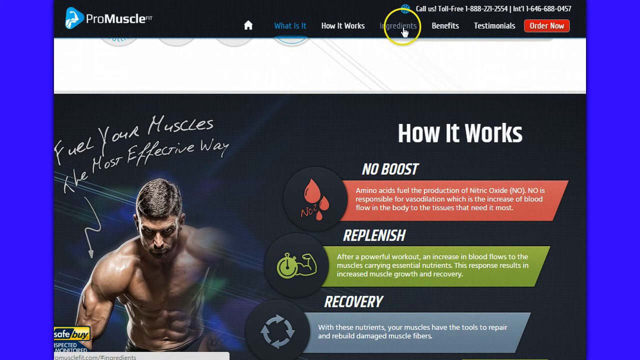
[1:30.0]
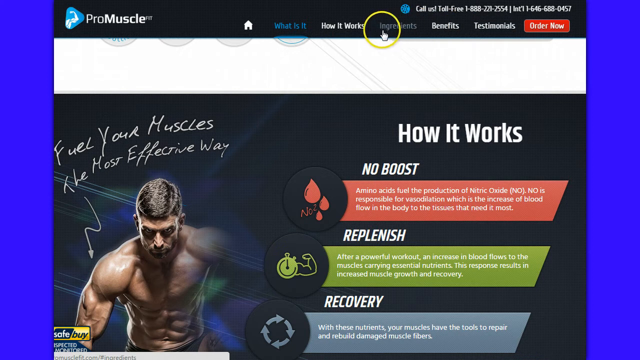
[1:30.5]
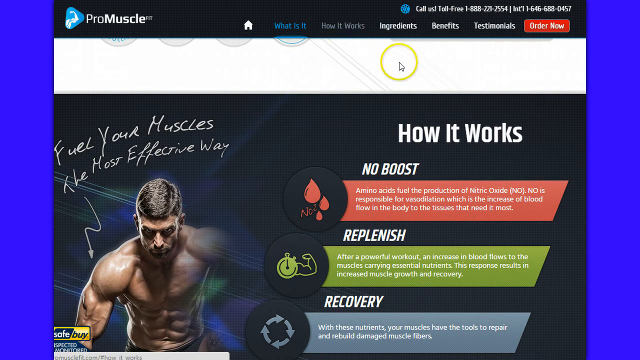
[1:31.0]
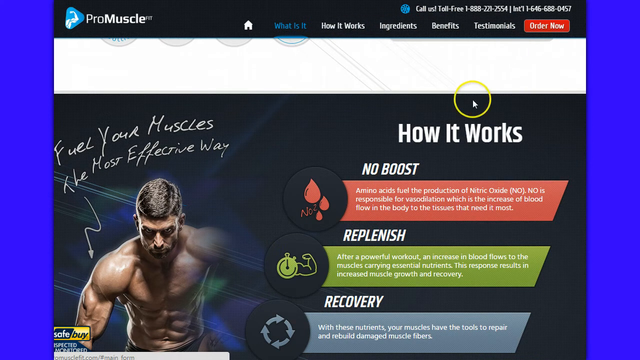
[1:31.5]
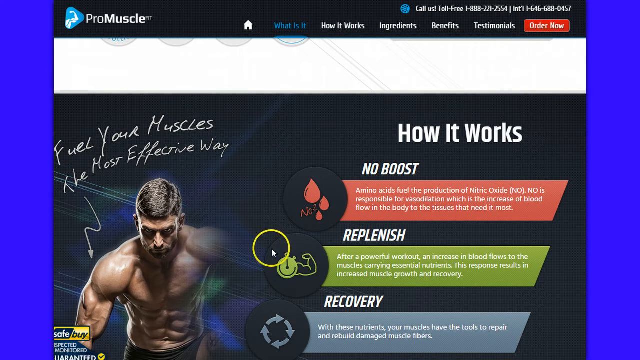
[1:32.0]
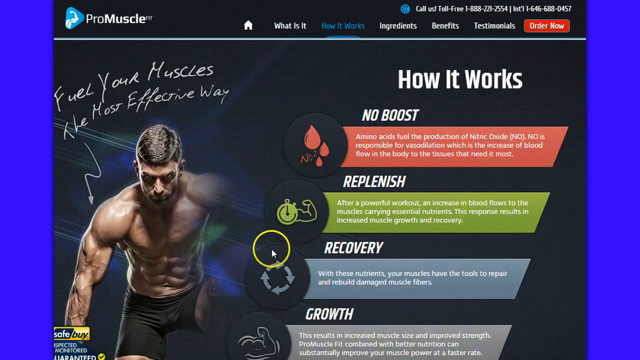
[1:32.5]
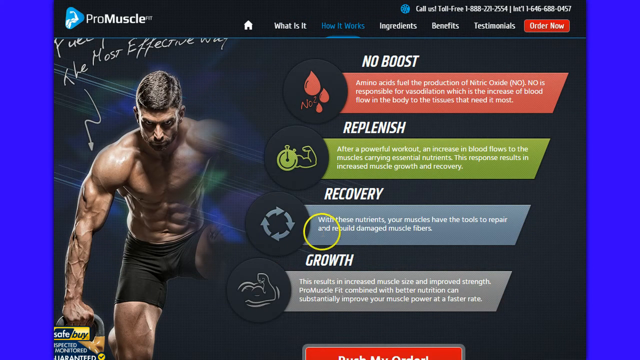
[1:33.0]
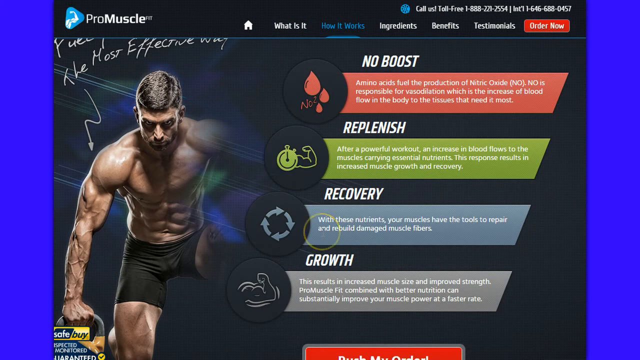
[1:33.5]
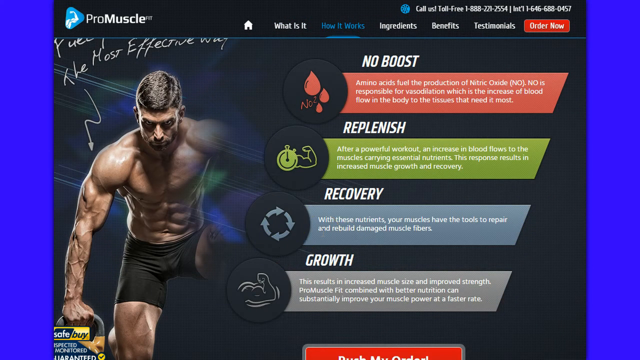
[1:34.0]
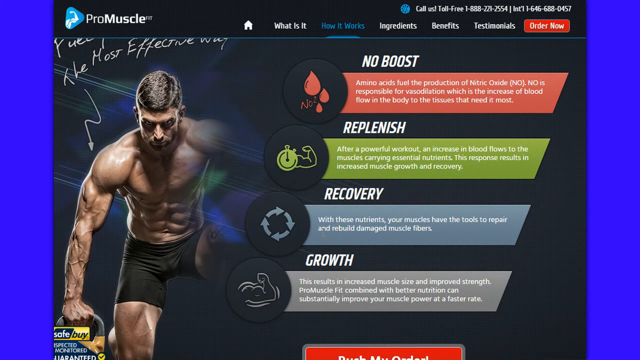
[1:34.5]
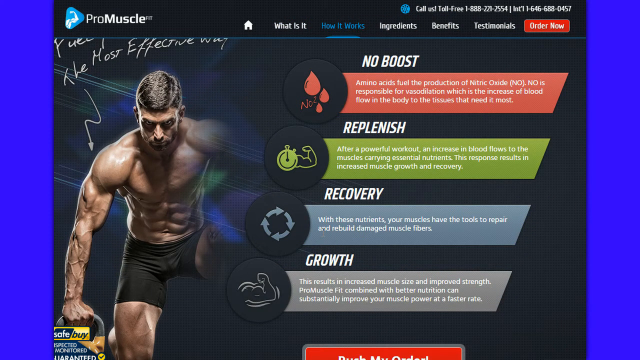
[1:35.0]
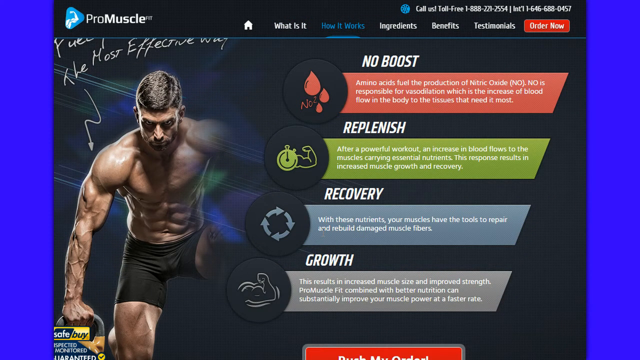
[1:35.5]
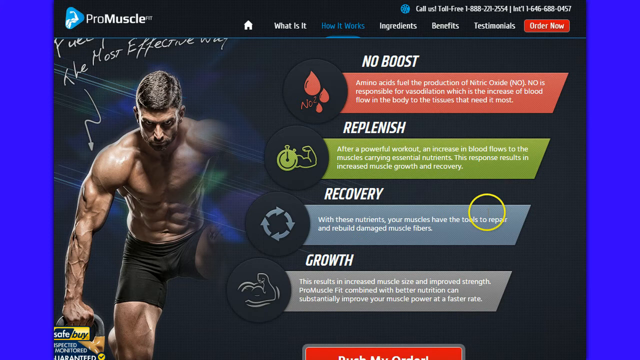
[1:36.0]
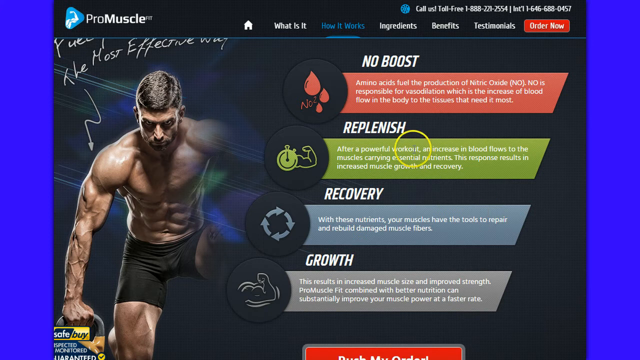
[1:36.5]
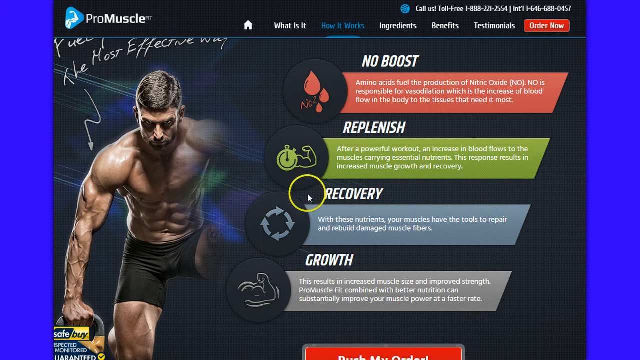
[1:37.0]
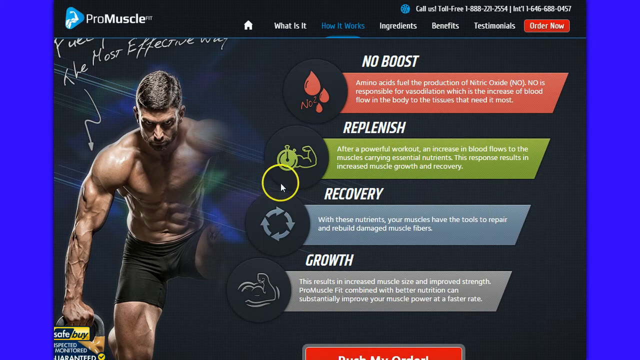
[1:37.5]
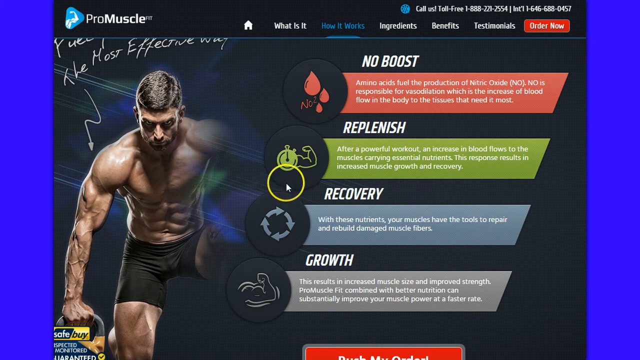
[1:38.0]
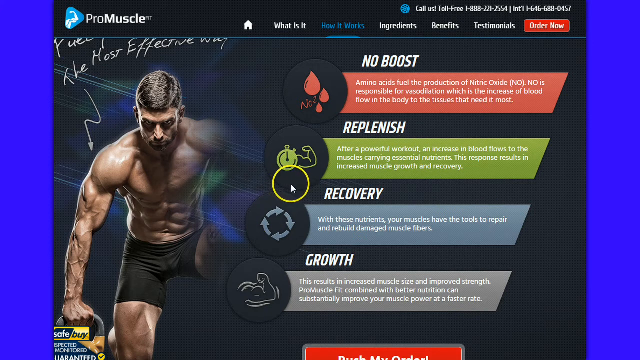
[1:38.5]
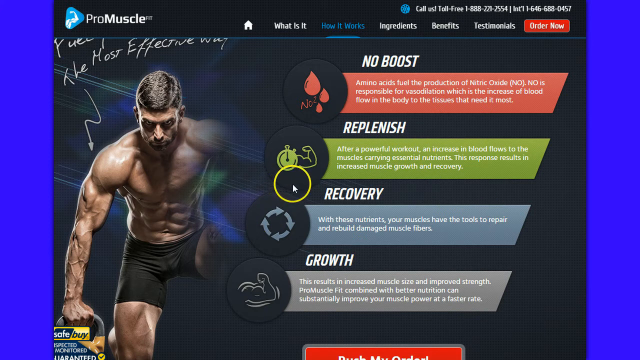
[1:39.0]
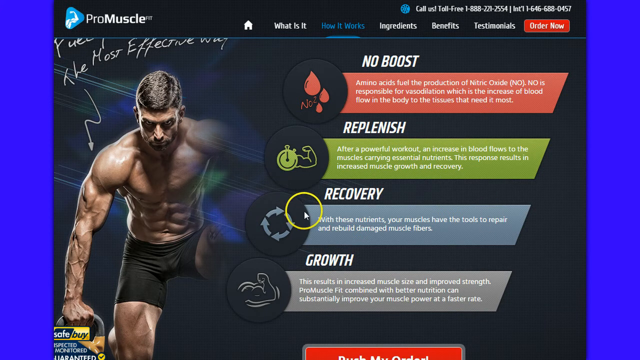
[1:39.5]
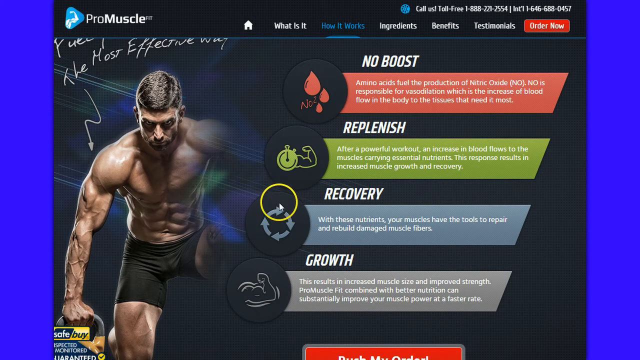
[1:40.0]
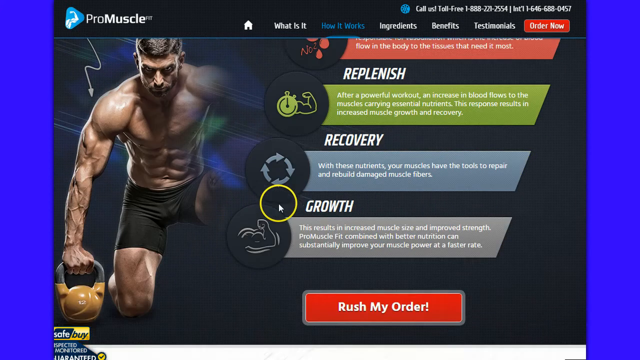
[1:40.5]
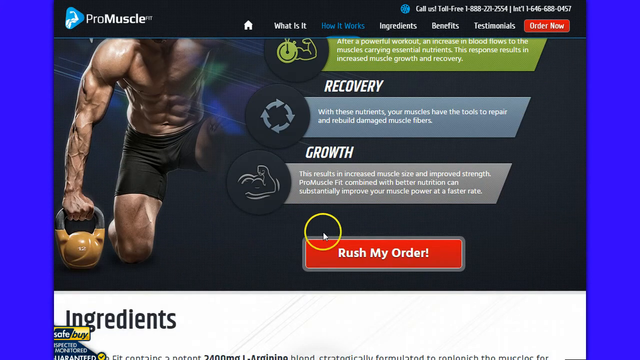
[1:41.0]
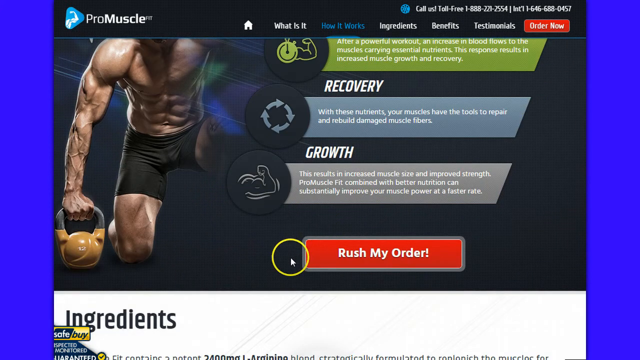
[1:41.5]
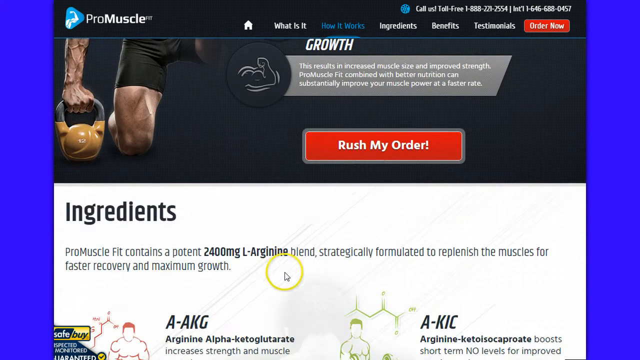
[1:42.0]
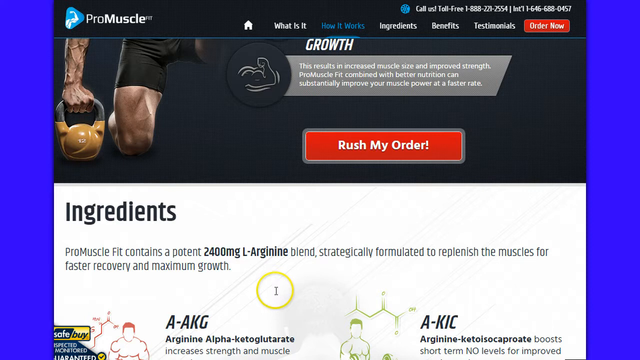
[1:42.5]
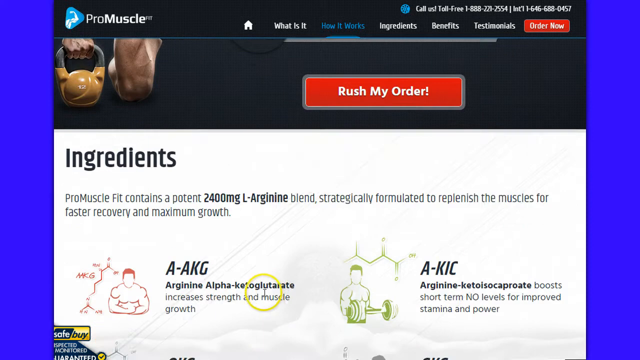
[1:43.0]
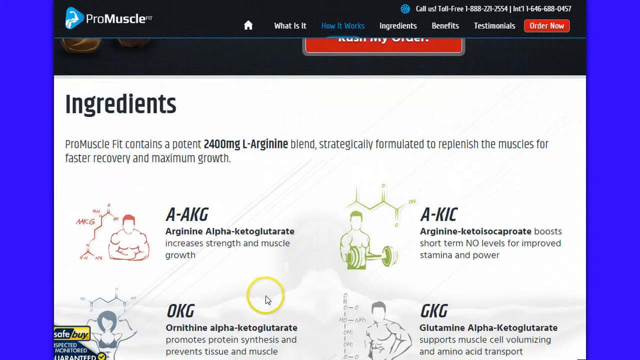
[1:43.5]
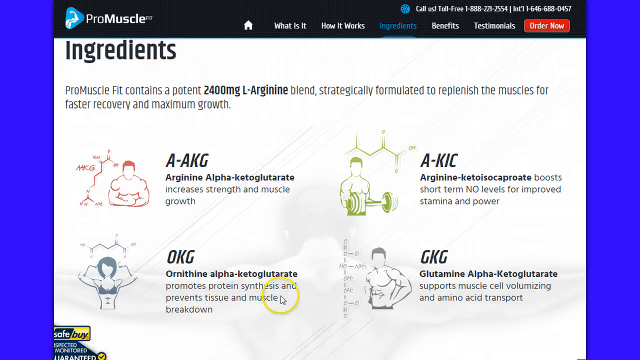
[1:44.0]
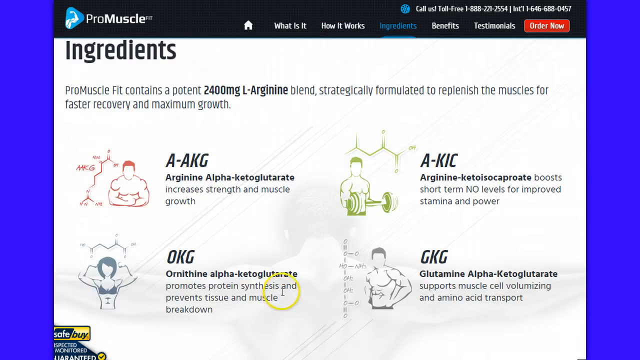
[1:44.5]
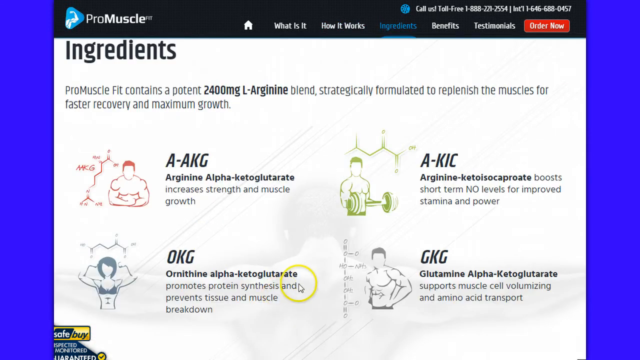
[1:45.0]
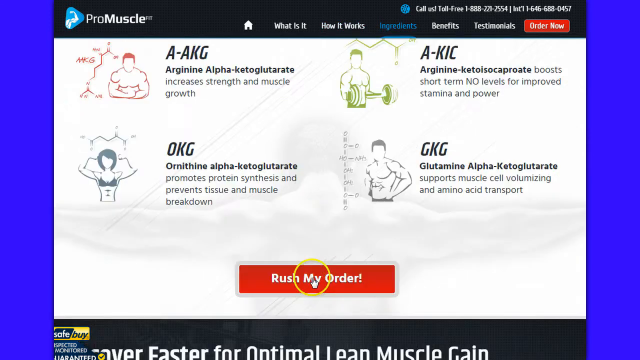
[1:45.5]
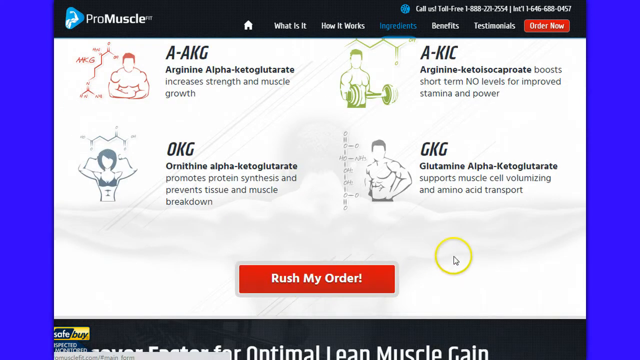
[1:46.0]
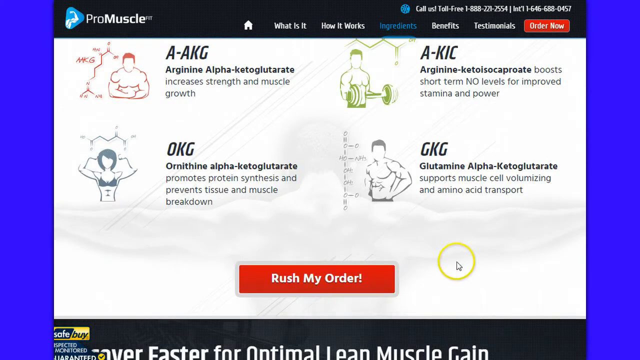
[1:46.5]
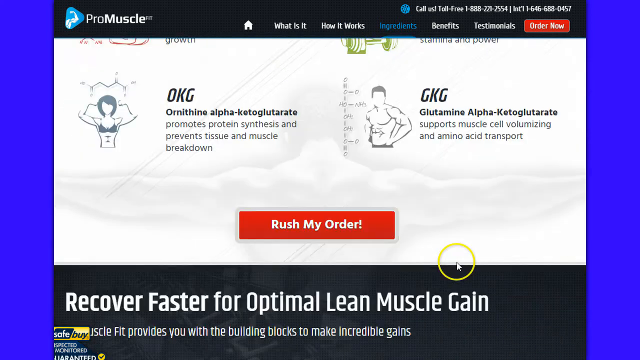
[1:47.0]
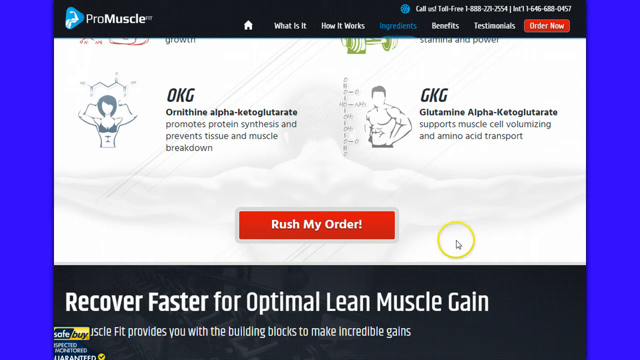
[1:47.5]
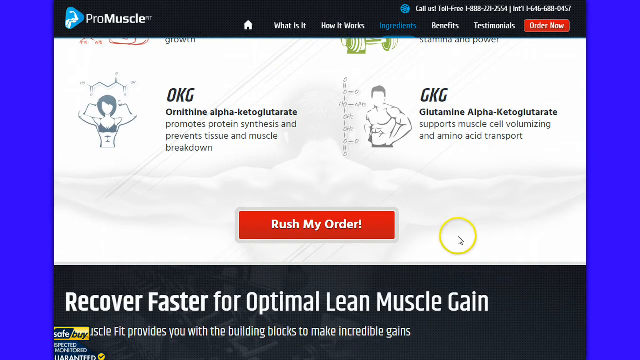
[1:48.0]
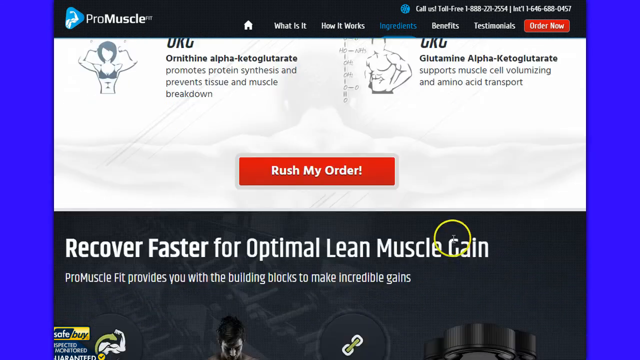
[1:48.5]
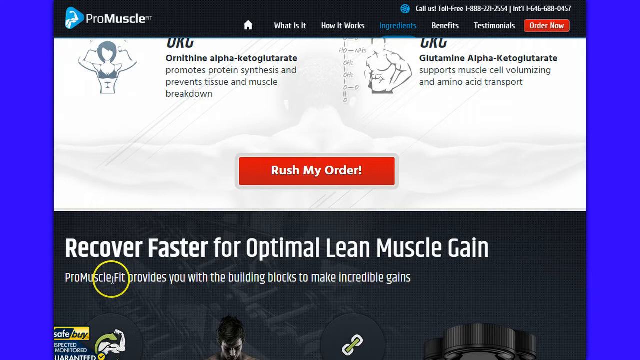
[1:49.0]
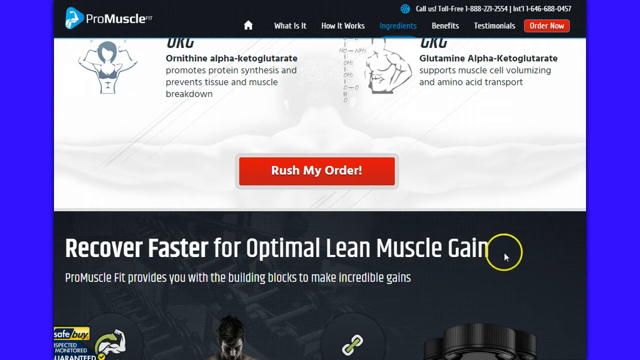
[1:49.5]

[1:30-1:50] The ad on the computer screen is for something called ProMuscle. As the page scrolls down, a section reads "free your muscles the most effective way." It shows a man with a lot of very strong muscles, along with "how it works" and "no boost, replenish recovery," and each area has more information. A spot is clicked, and the page scrolls down to where it says "growth," then back up to where it says "recovery." The cursor continues down to a red button that says "rush my order," then goes a little further past it. The edges of the video are royal blue, and the cursor is something like a yellow circle.